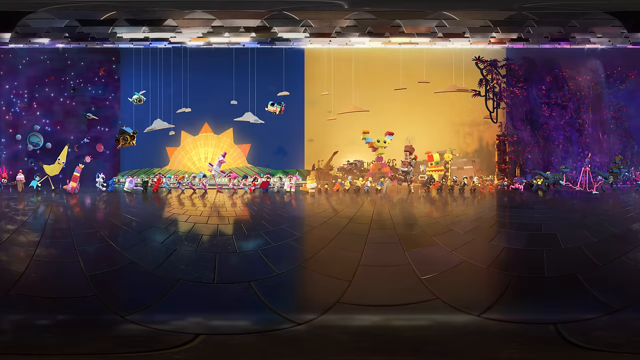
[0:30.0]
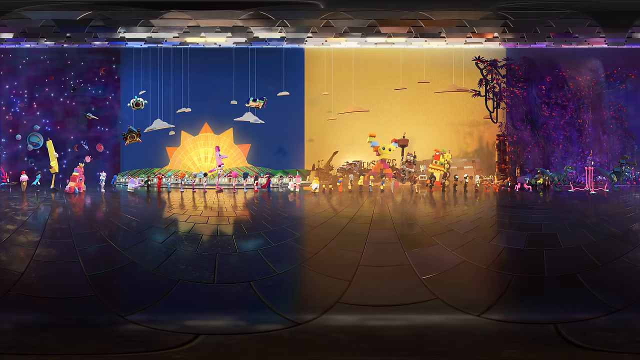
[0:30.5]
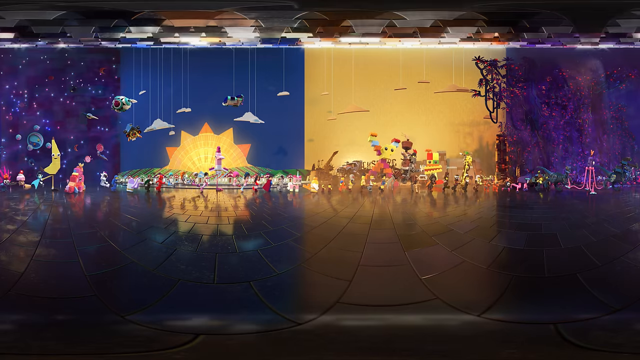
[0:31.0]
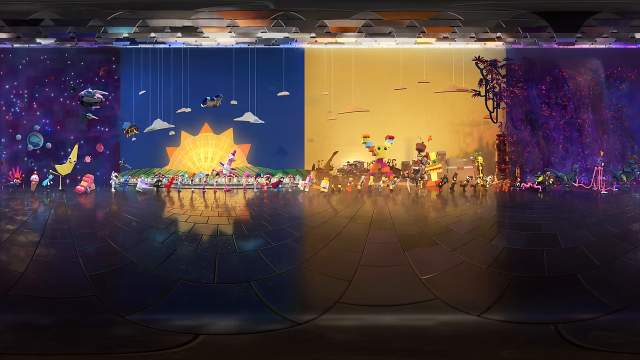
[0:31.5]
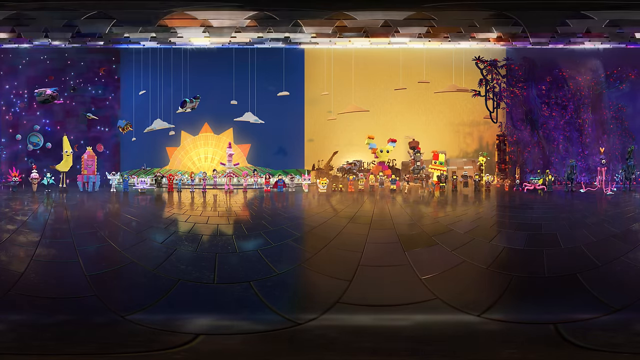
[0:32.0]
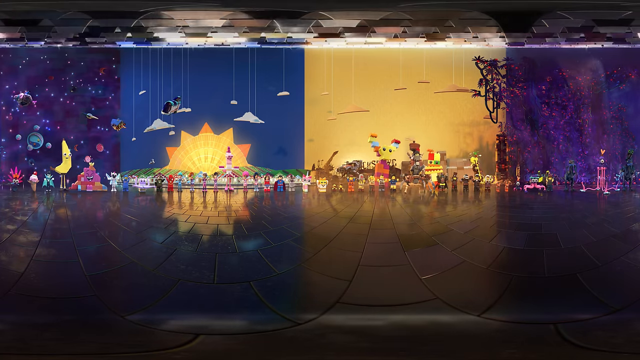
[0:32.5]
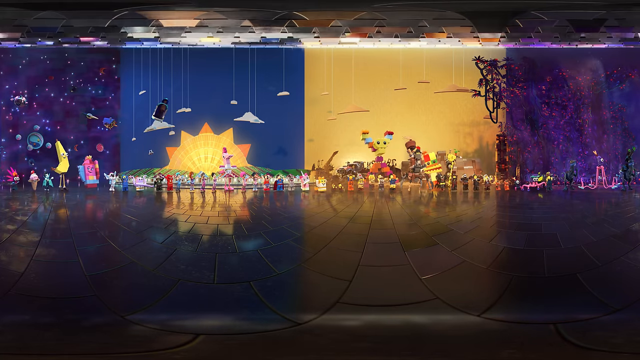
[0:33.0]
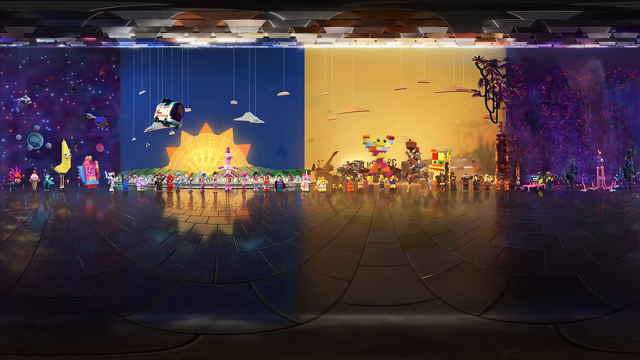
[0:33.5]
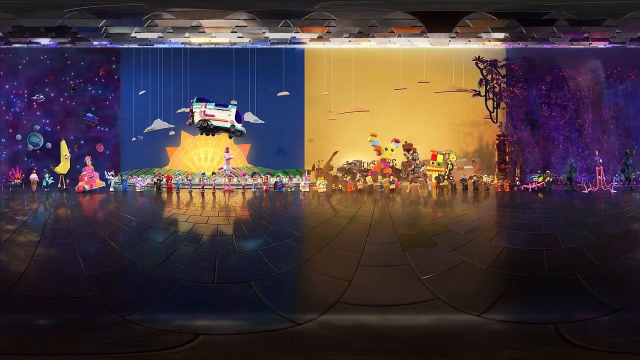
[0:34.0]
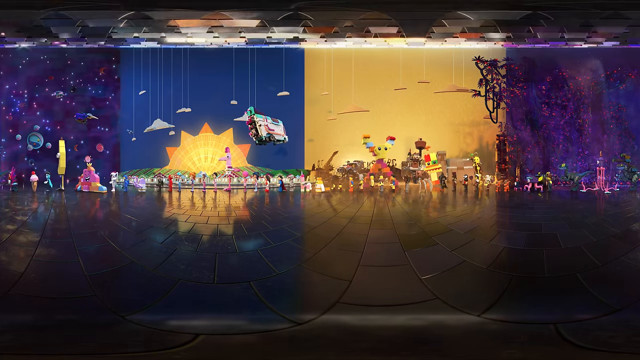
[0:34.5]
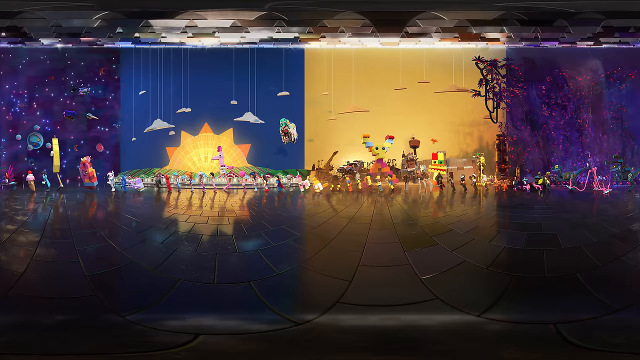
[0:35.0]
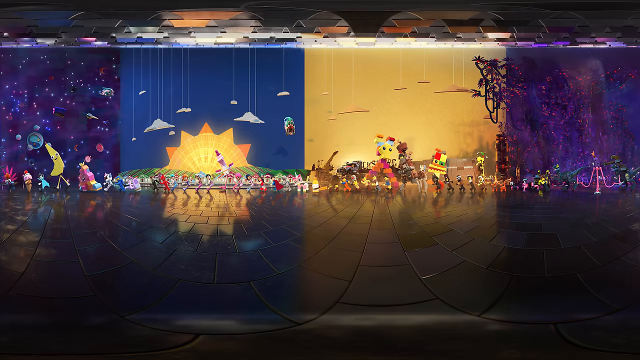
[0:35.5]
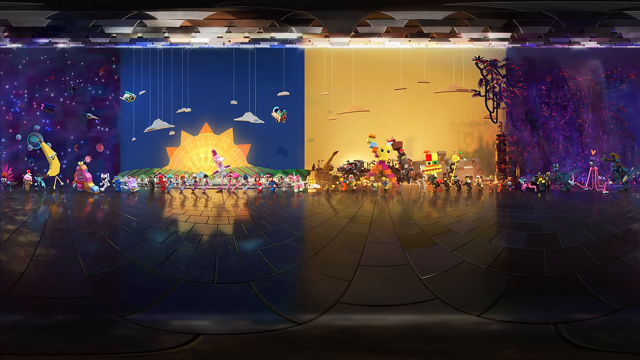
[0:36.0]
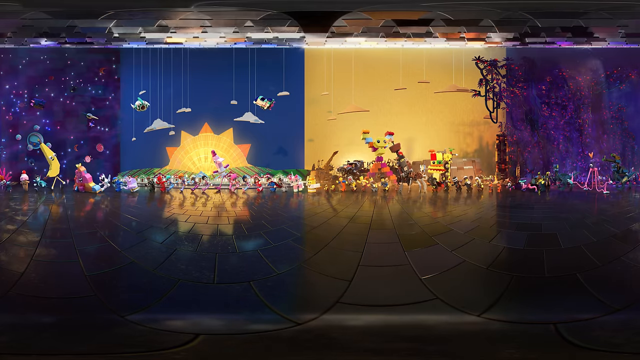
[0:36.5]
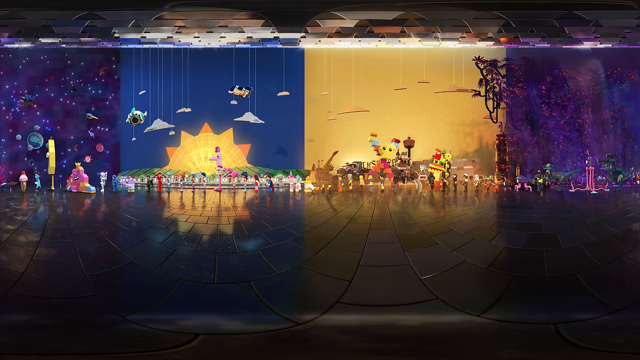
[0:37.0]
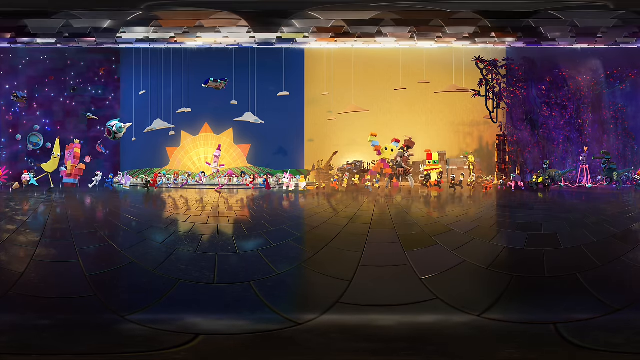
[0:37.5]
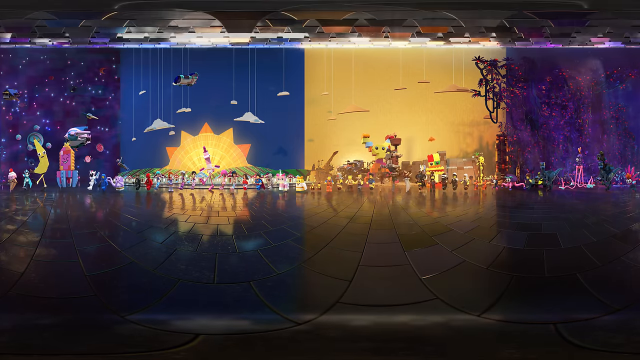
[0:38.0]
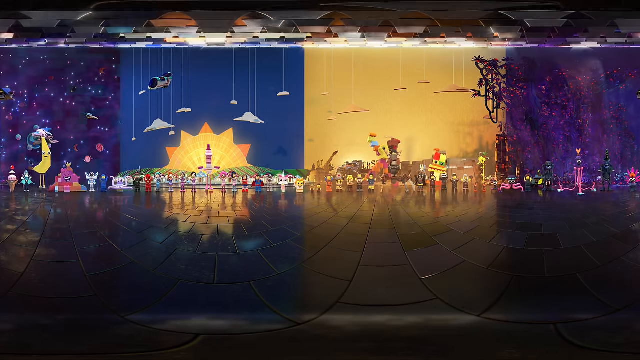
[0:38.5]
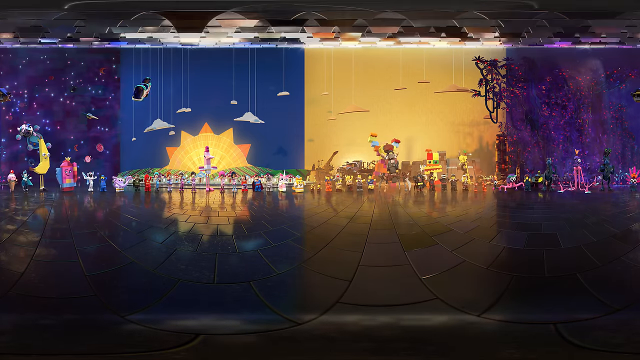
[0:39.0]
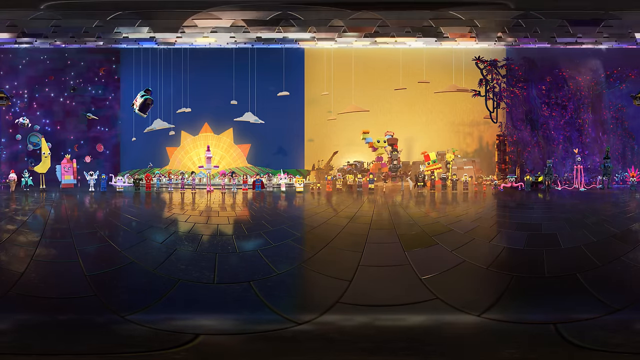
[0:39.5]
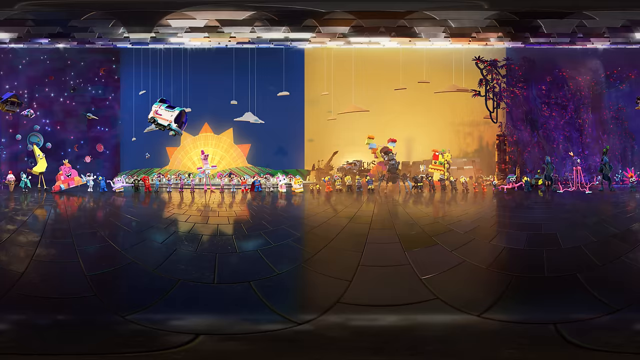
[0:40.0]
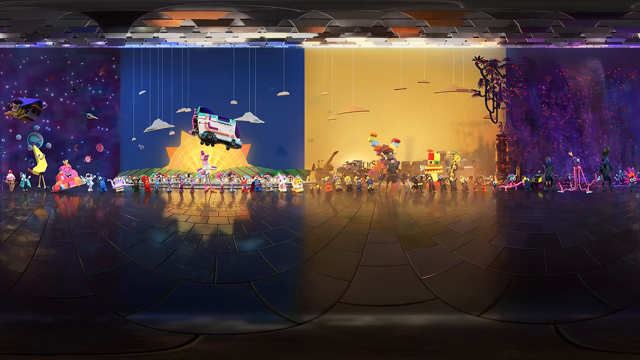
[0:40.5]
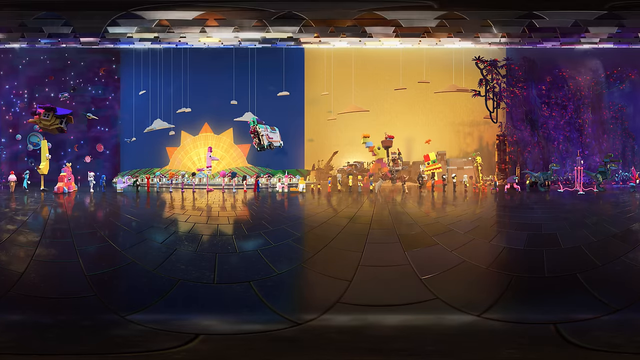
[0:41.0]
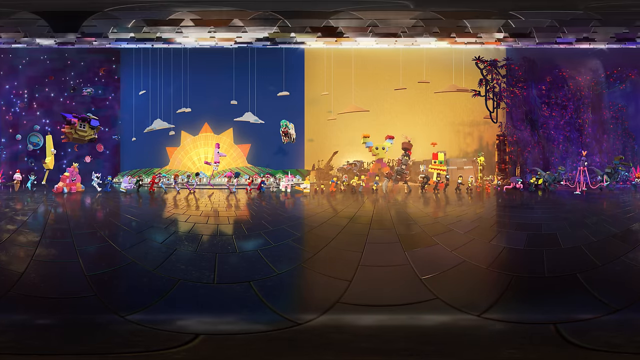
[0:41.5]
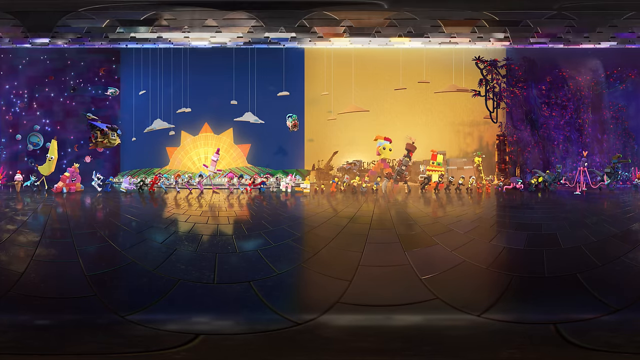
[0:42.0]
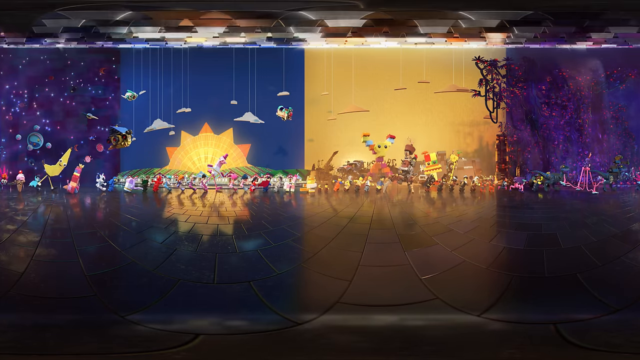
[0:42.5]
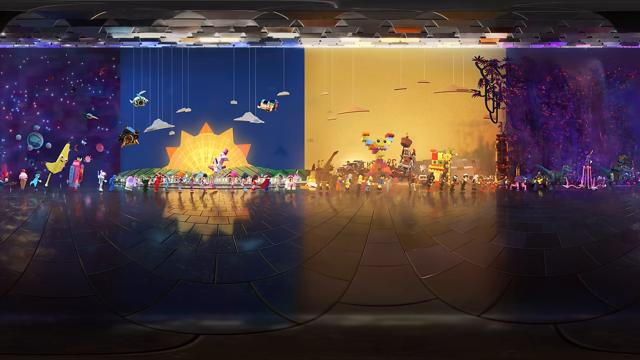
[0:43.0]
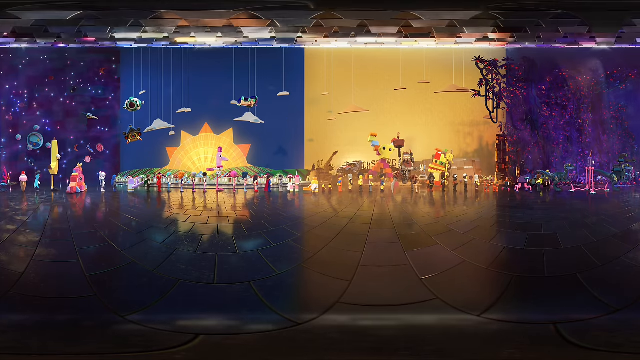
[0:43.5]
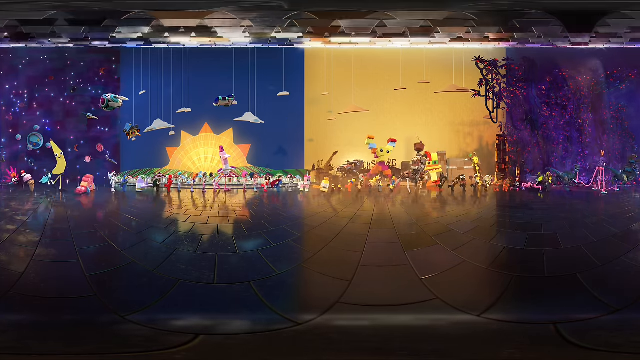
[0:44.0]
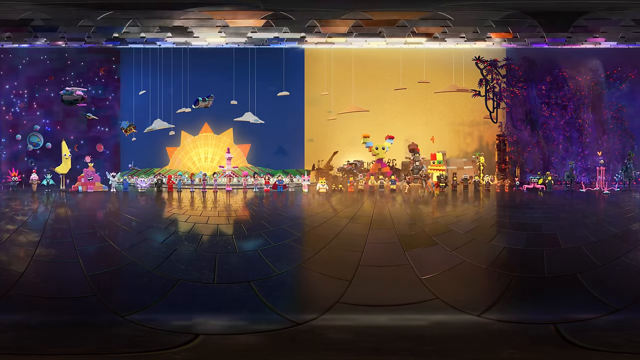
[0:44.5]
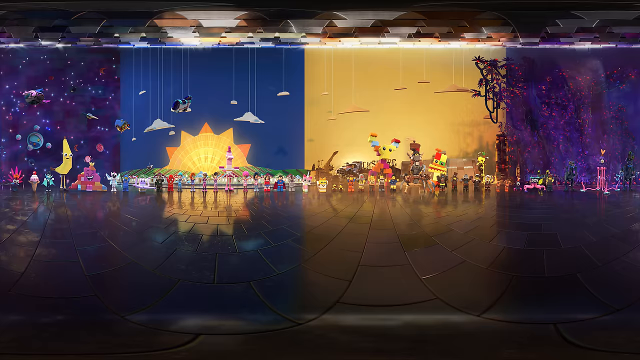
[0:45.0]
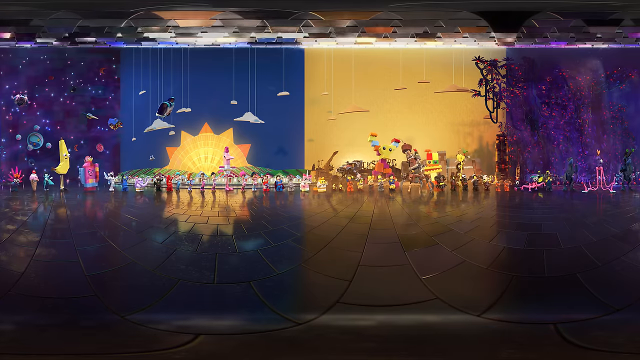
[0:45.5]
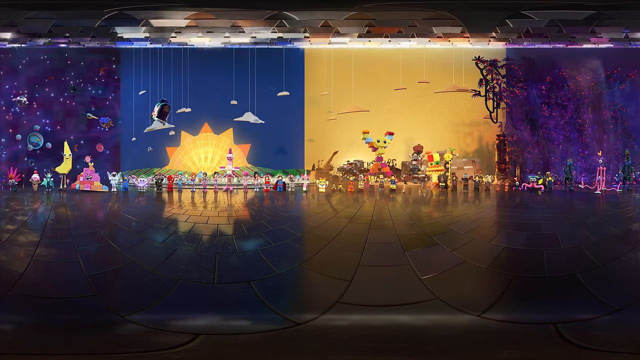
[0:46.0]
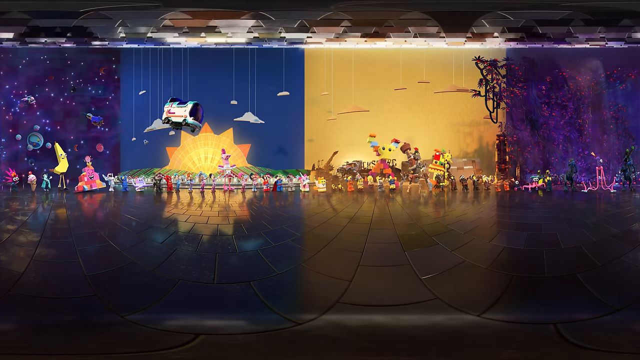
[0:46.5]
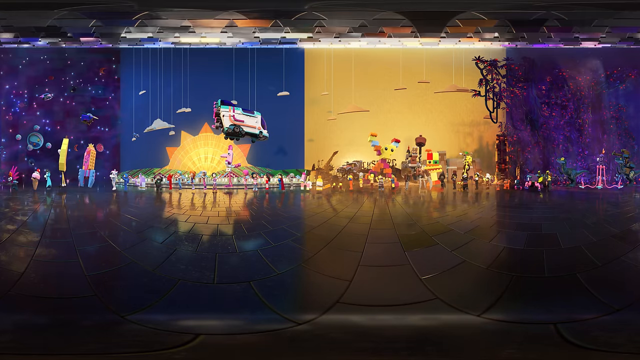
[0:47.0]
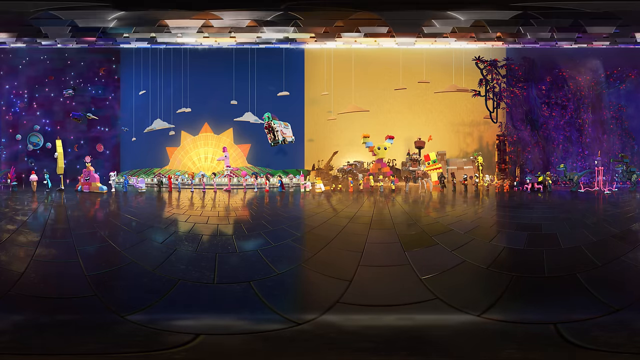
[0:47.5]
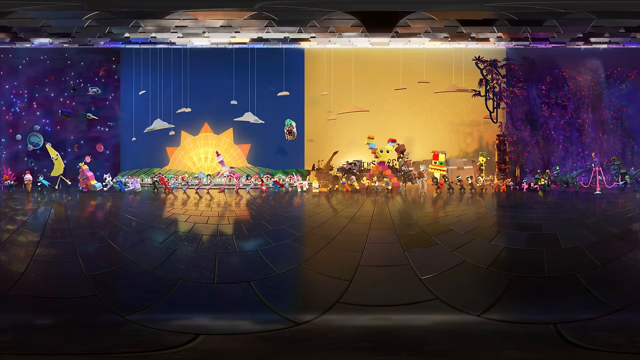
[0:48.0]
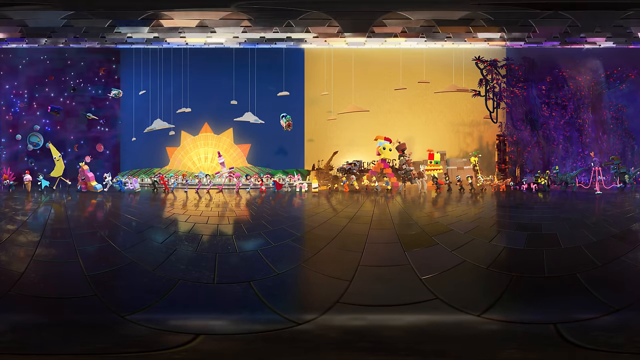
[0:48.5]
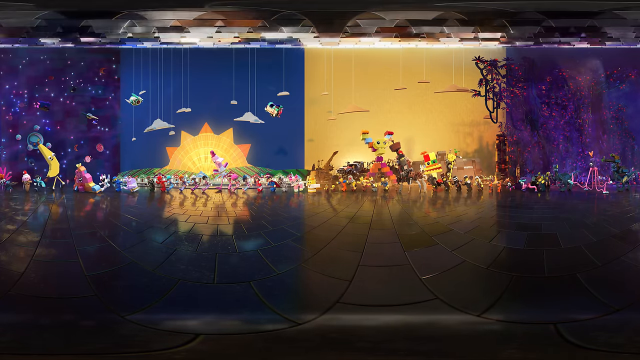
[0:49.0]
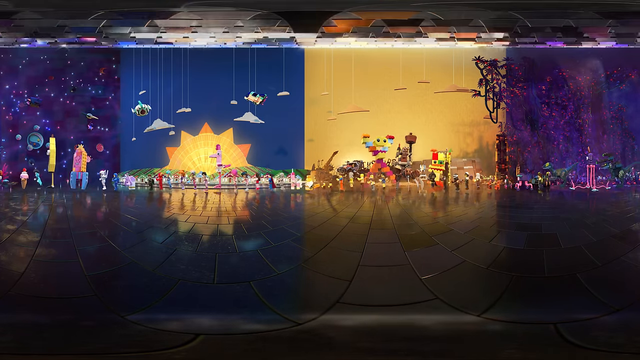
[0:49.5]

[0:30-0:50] The line dancing continues. The figurines head to the right of the screen dancing, then face the center and do some sort of jump, then head toward the left of the screen and do some sort of moves: they put one foot in front of the other, lean forward and move their arms. They do the same in the other direction, and when they reach the center they hop. On the right side of the line there appear to be eight figures, six of them around the same size and two really tiny. On the left side of the line there appear to be six figures wearing costumes rather than being yellow, including a unicorn, a superhero and a few others in costume.